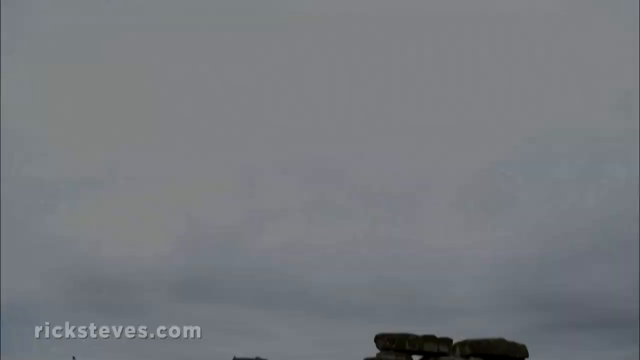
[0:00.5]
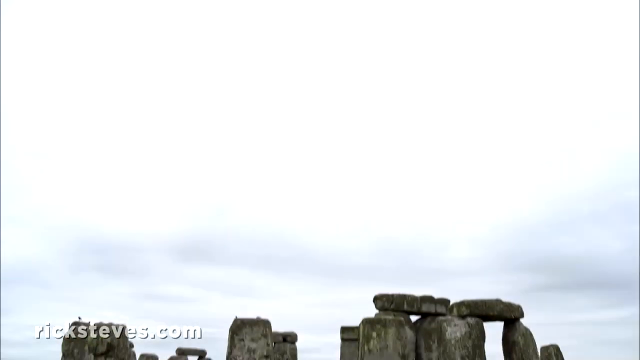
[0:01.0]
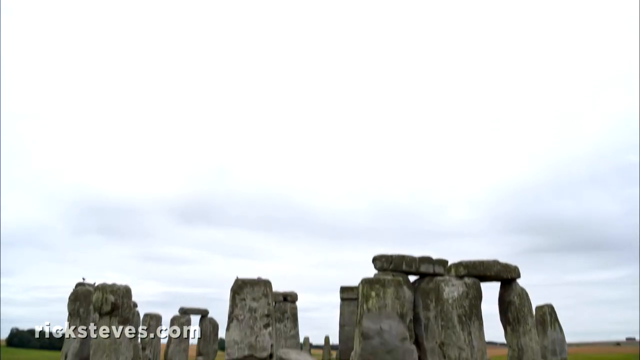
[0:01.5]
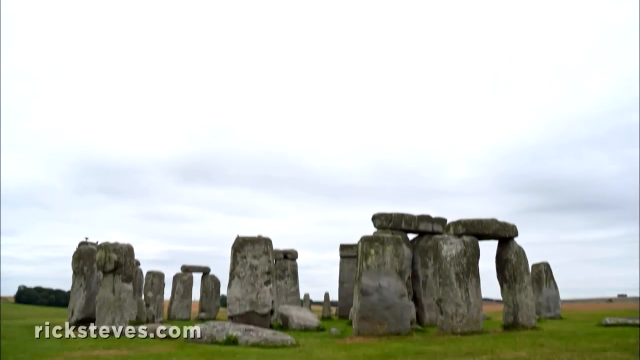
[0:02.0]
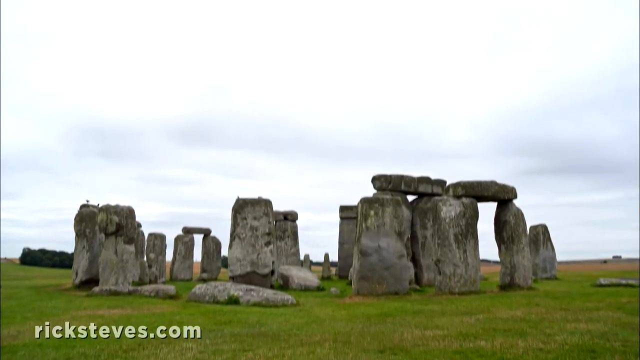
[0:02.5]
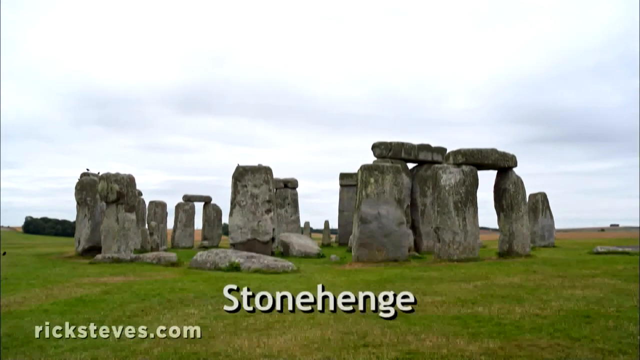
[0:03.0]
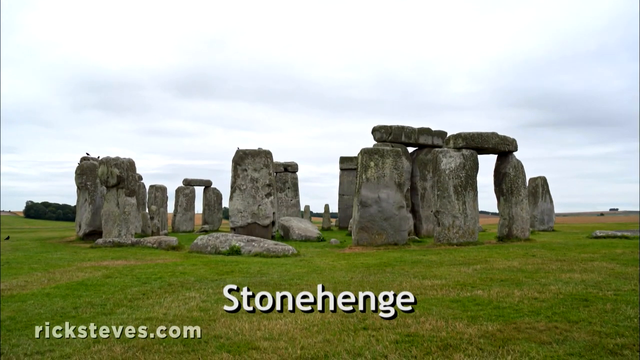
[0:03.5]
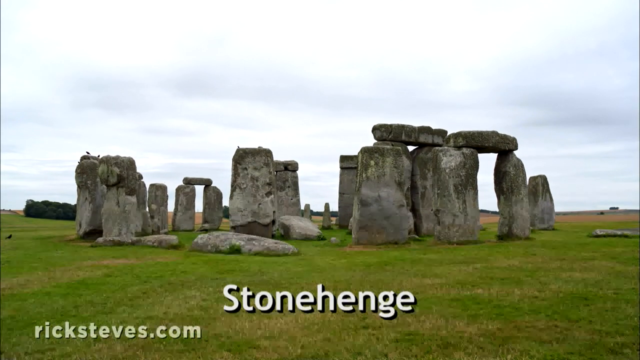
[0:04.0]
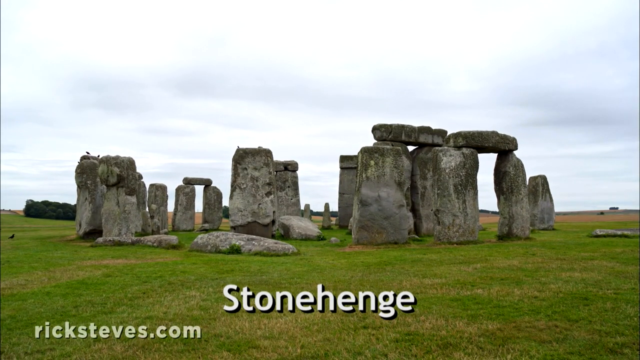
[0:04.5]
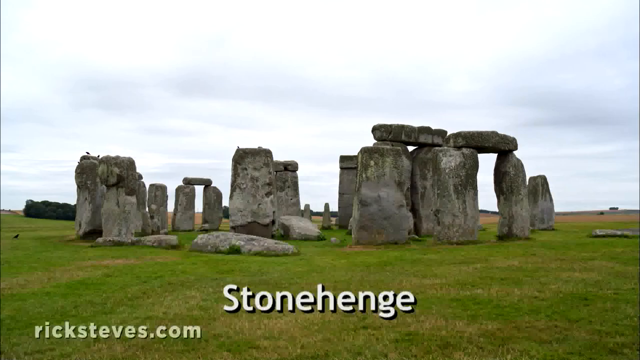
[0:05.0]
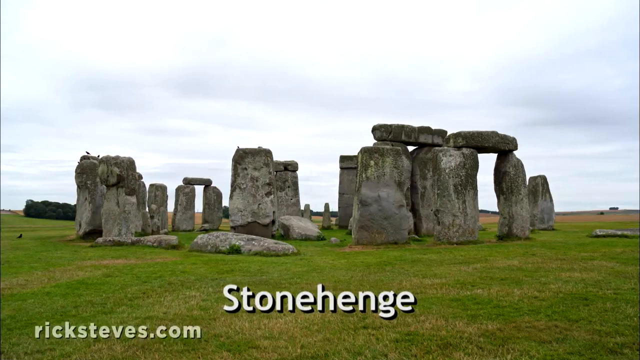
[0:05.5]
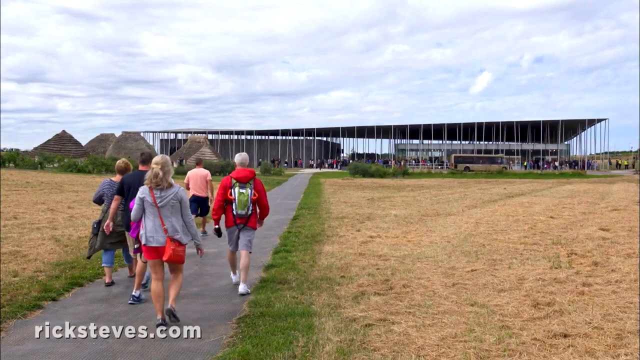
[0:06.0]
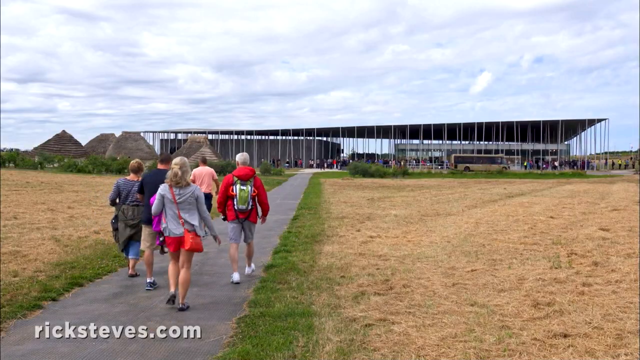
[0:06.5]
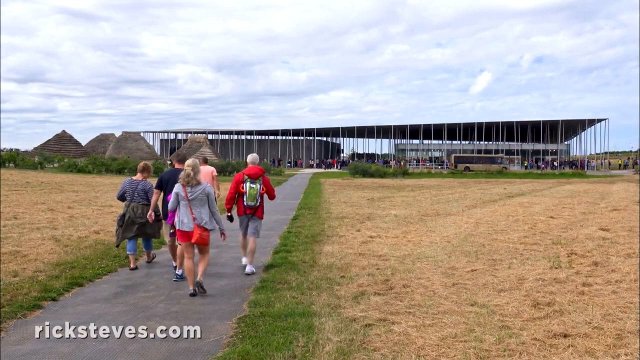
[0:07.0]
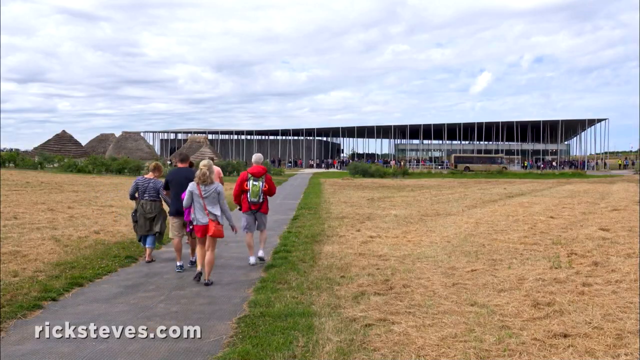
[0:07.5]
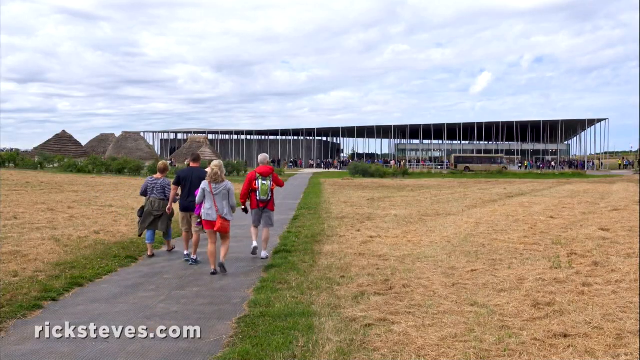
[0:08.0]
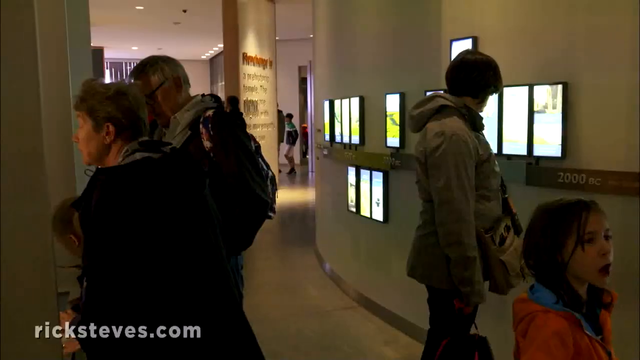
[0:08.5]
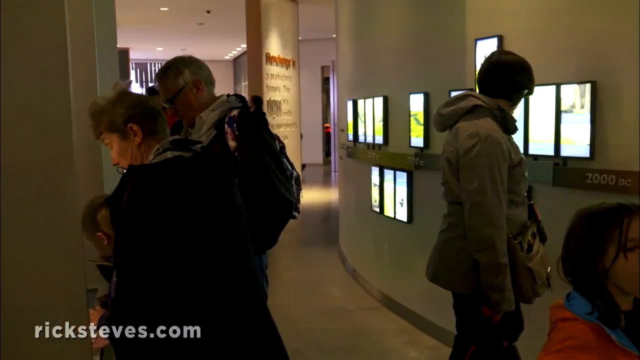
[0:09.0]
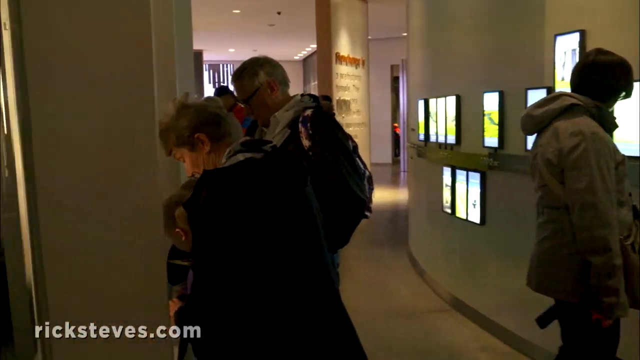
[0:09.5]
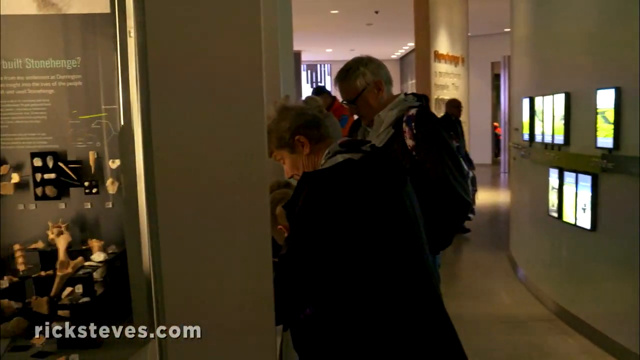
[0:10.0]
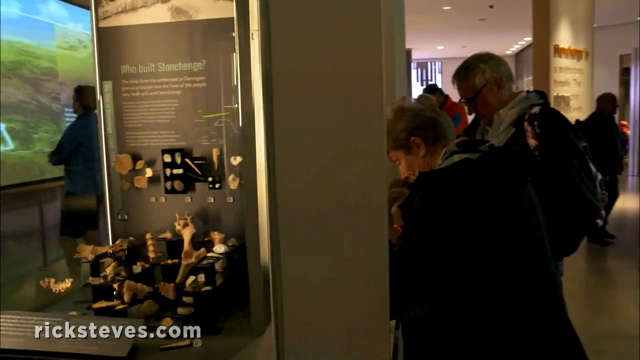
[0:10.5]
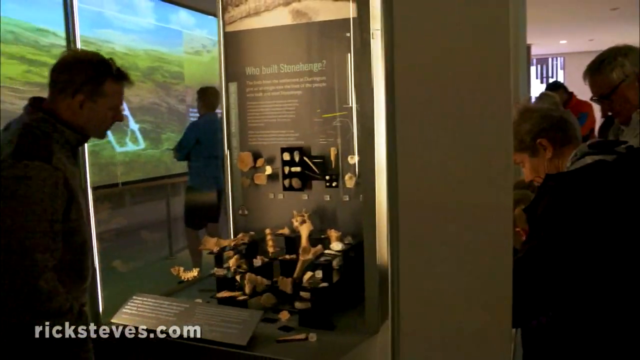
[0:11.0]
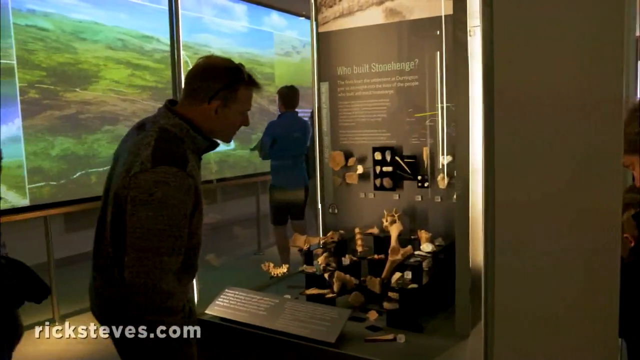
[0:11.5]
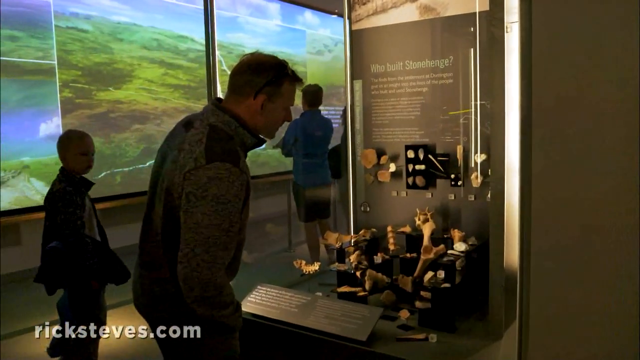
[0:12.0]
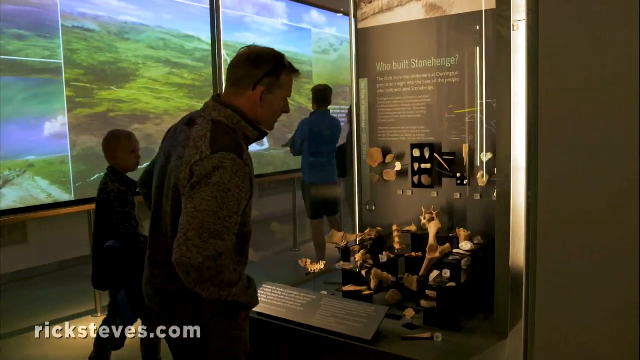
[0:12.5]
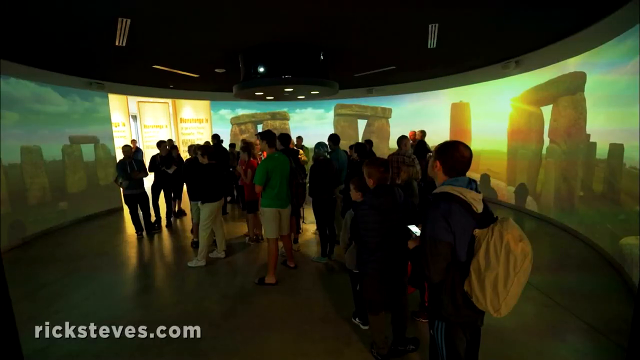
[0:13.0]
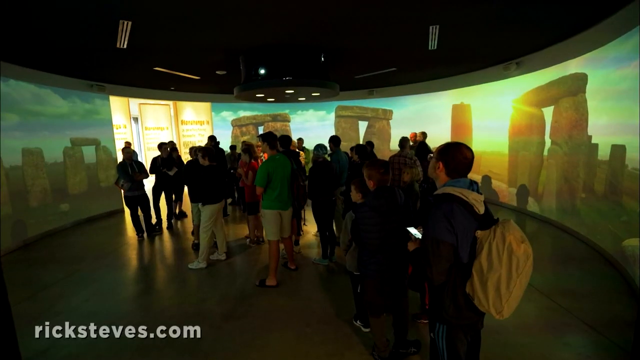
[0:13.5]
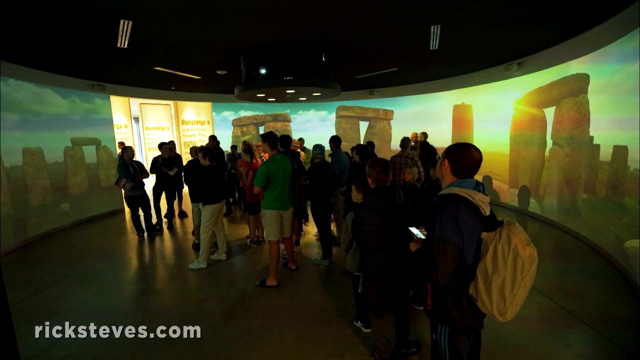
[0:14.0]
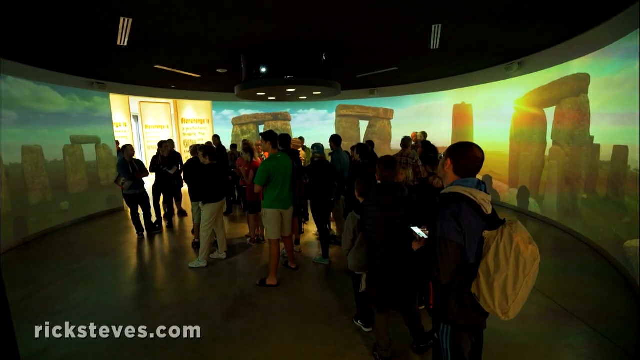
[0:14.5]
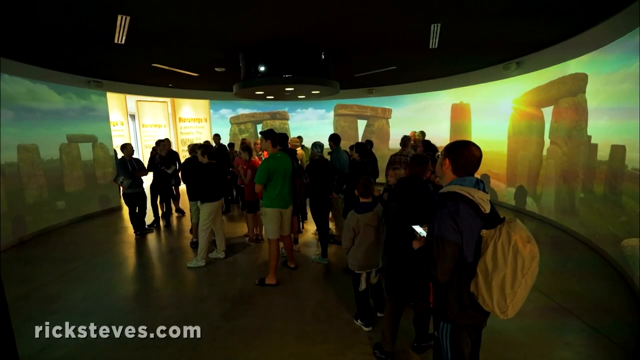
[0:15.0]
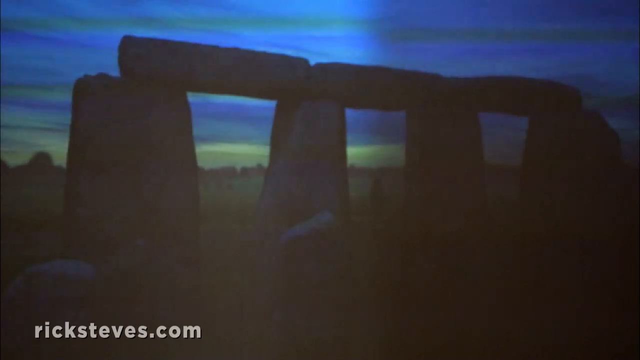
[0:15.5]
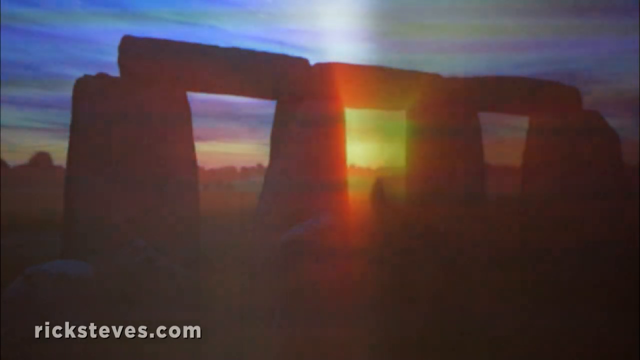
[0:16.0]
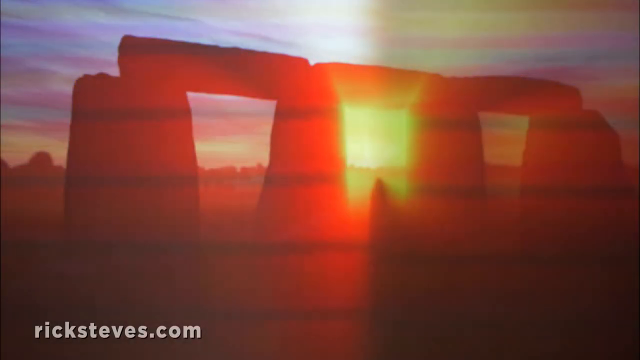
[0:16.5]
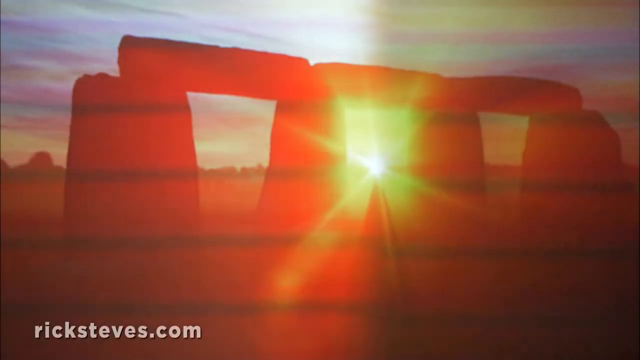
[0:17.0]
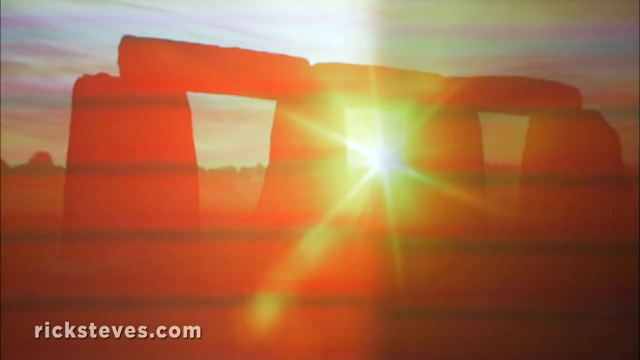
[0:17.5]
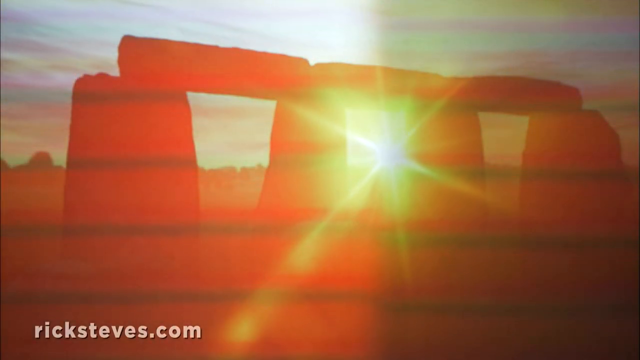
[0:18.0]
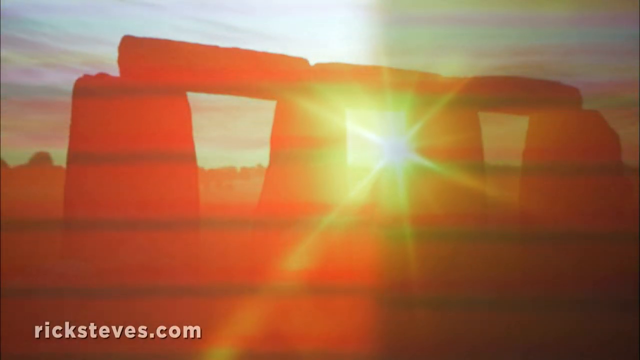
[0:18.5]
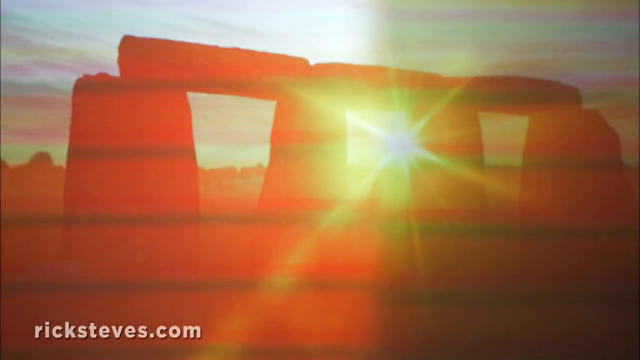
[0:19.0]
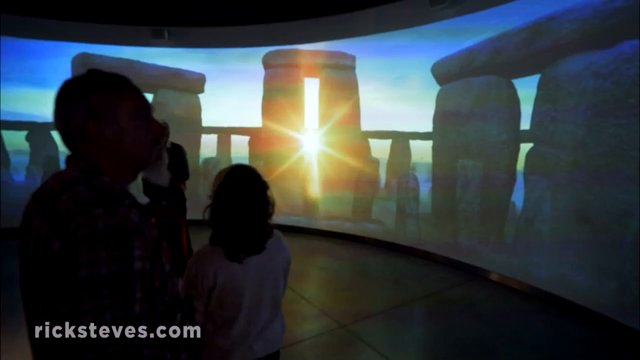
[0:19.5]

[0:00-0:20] The video appears to show Stonehenge. About five people walk along the tourist area as they approach the Stonehenge stones. A picture of Stonehenge shows bright sunlight going through. One of the men walking in the tourist area wears a red jacket and a black backpack. A link to the site of the video appears: ricksteves.com. There is a view of Stonehenge in the daytime with bright blue skies, and a view of Stonehenge at dusk while the sun is setting. People walk around in what looks to be an indoor tourist information area.